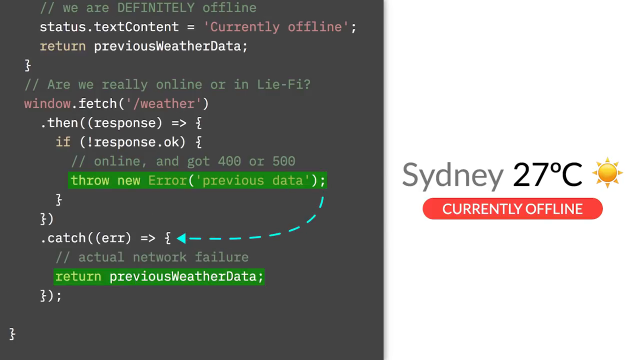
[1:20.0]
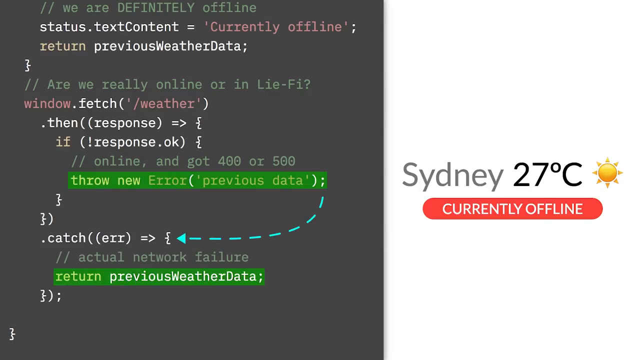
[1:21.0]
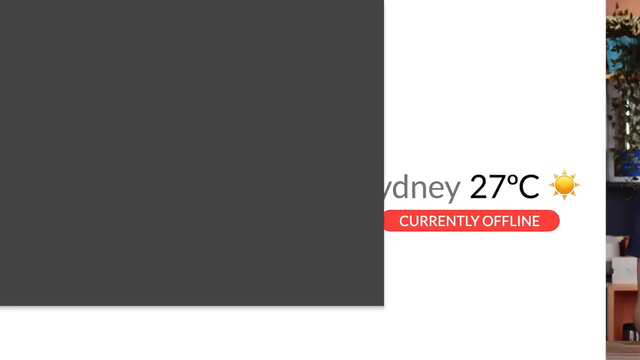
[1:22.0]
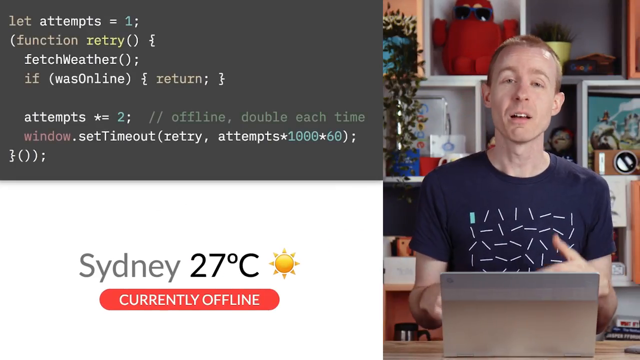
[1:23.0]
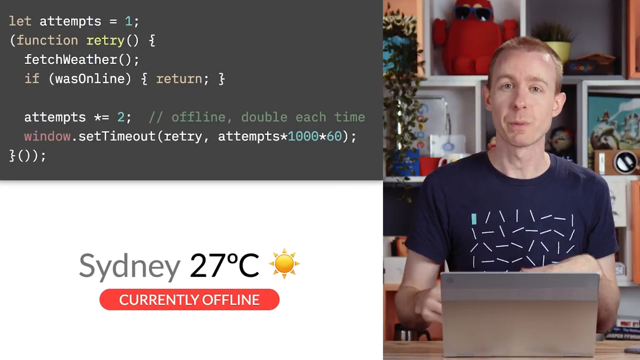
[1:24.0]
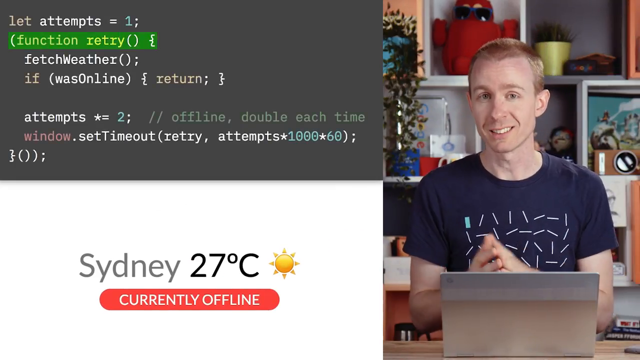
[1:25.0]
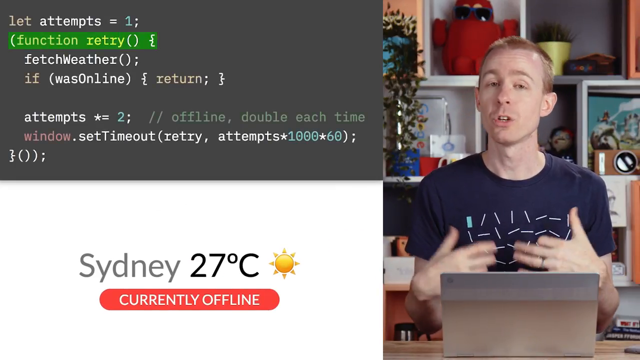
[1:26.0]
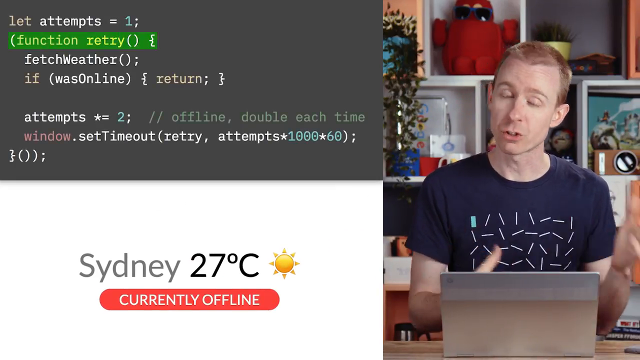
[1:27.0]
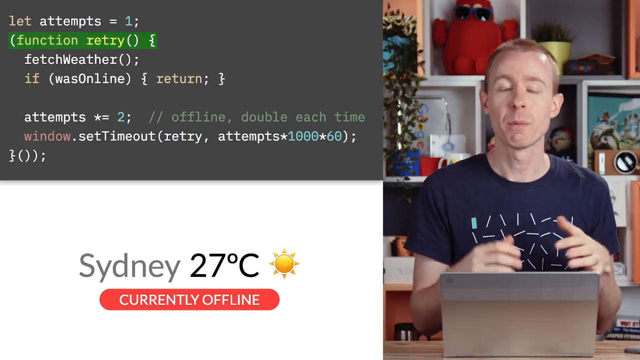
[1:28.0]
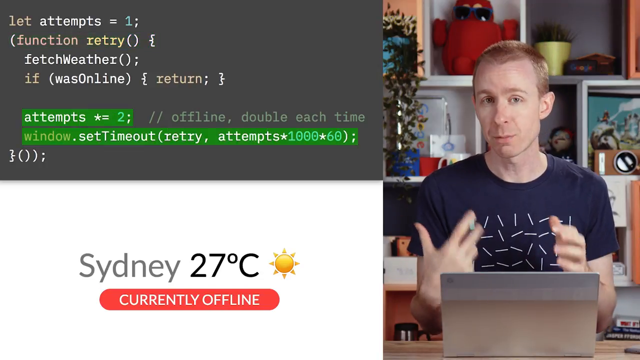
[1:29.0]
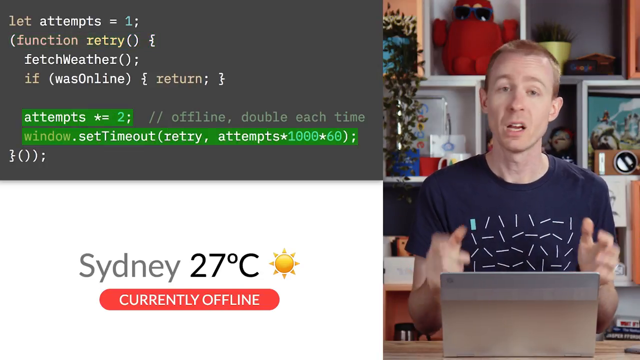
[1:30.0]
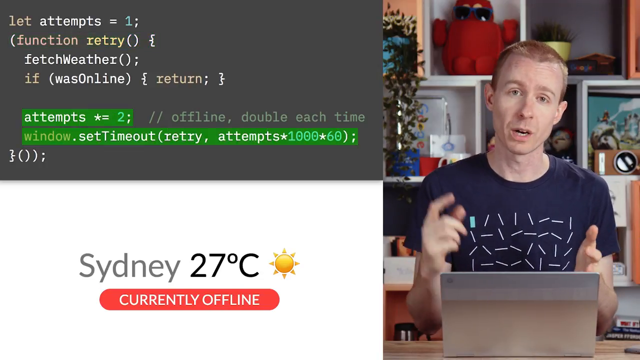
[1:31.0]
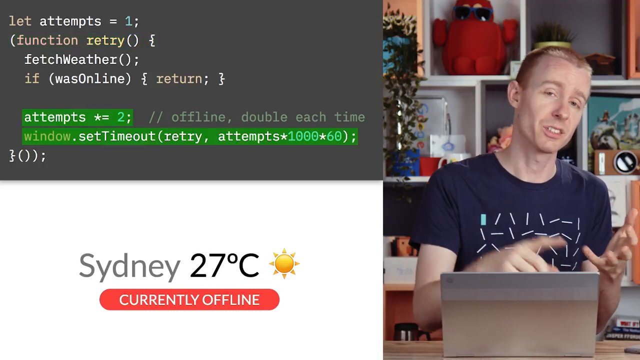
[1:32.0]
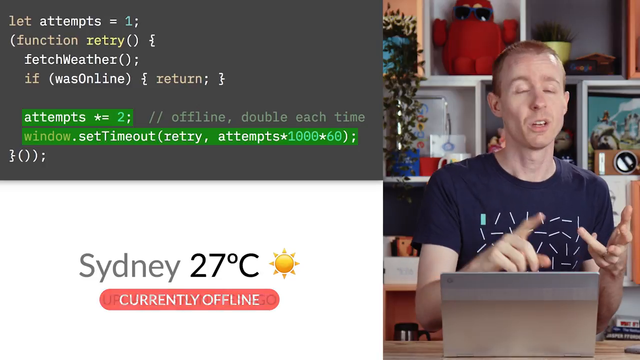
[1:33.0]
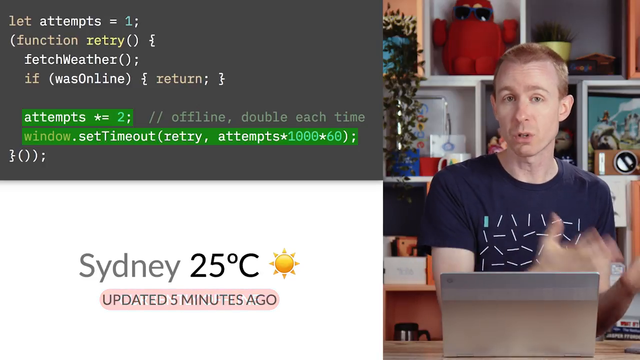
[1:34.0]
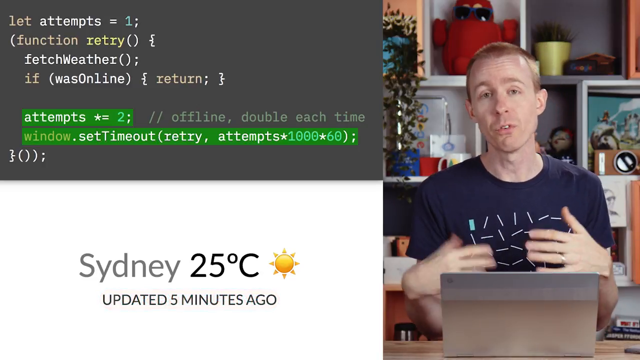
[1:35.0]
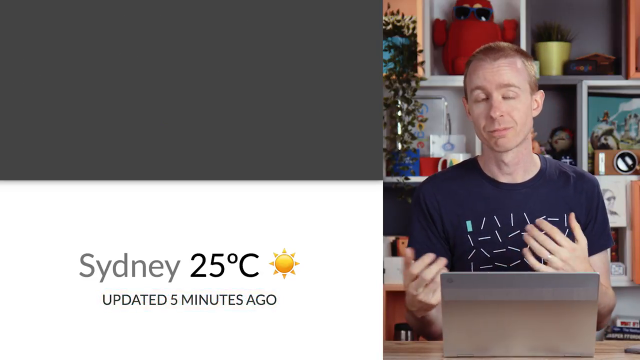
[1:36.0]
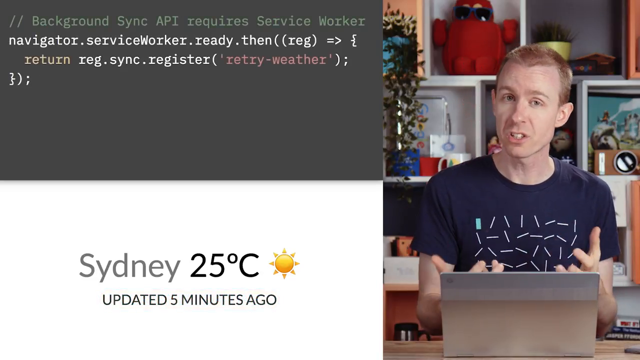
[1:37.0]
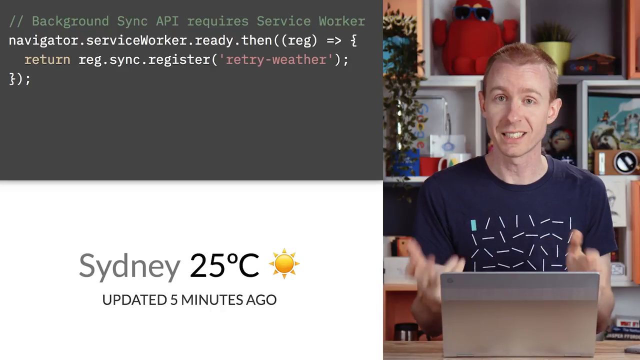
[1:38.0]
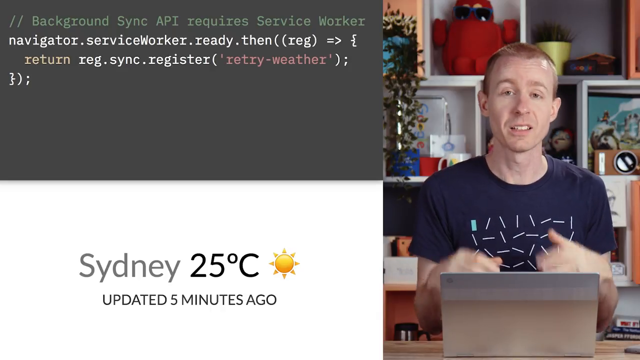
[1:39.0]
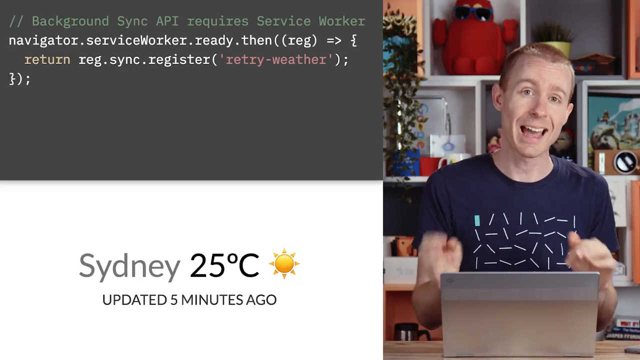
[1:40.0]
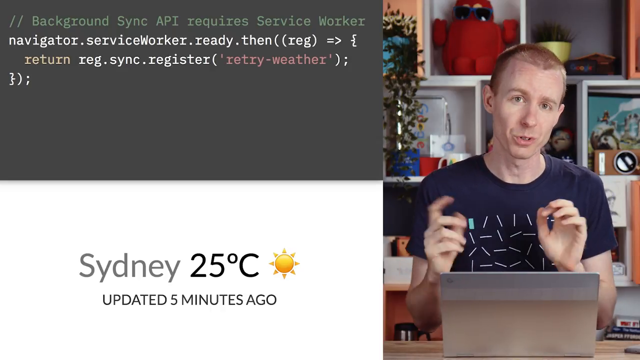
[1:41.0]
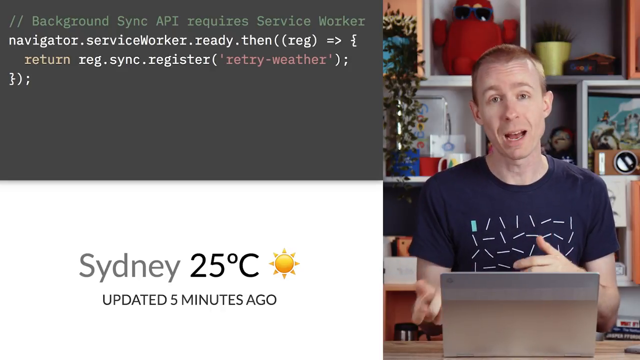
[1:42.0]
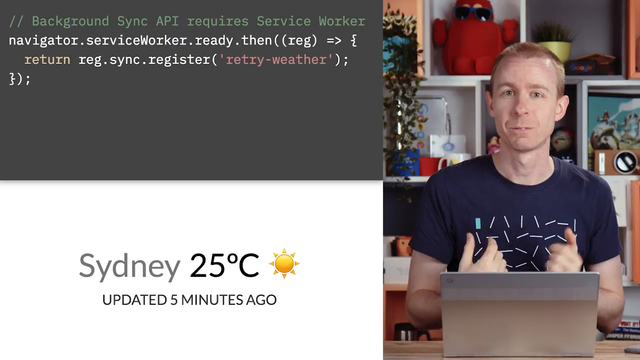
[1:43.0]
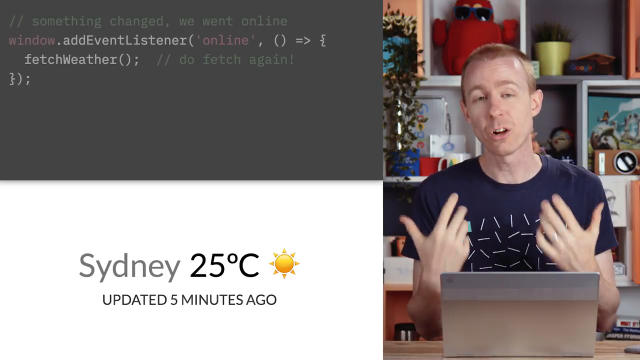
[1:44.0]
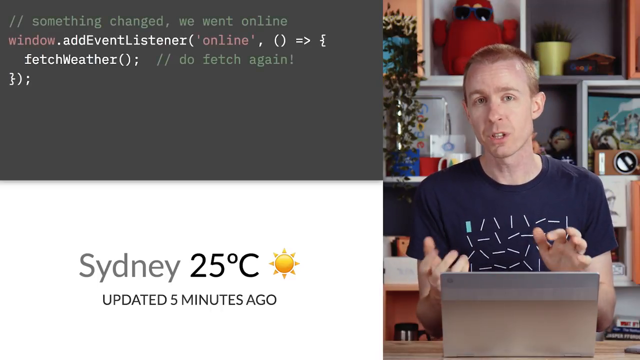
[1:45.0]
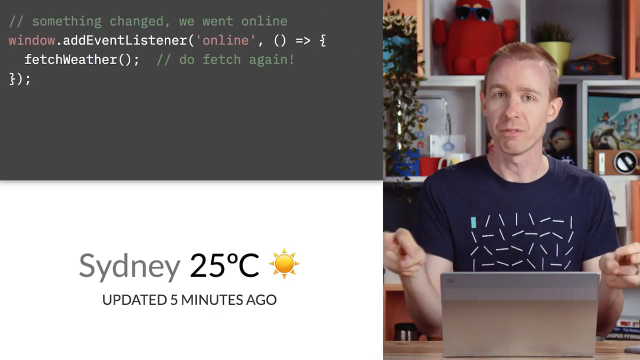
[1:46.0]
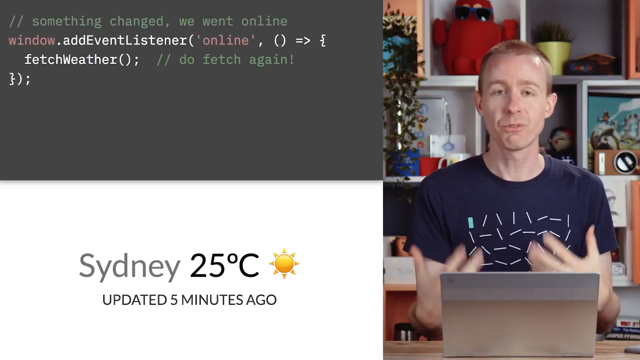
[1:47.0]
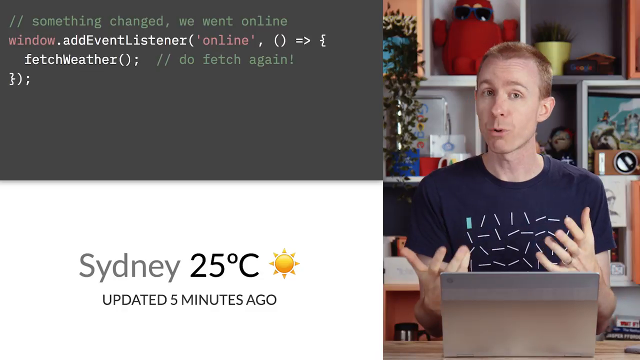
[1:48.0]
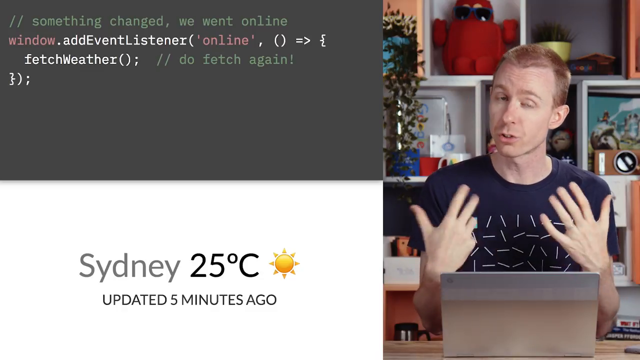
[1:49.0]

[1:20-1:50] The split screen becomes a three-part screen: the coding area is on the top left, and below it is the white screen reading "Sydney 27 degrees." The man appears on the right-hand side in the same position, still talking to the camera with hand gestures. He opens his left hand and, with his right index finger, touches his fingers one by one as he talks. He makes all kinds of hand motions, flipping his hands and moving them up and down, explaining enthusiastically. On the top left, the text continues to change. He makes an up-and-down movement with the index and middle fingers of both hands before returning to his usual gestures.